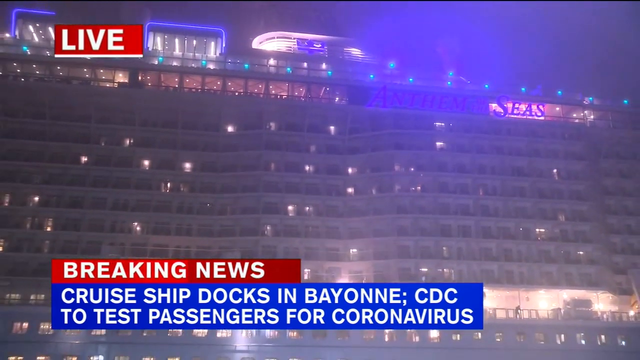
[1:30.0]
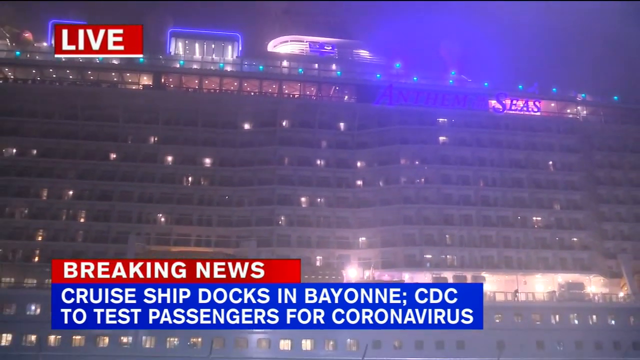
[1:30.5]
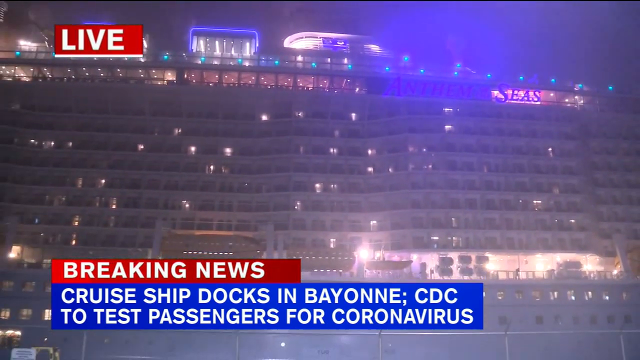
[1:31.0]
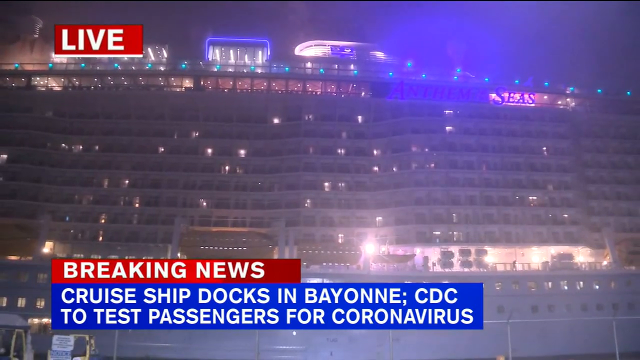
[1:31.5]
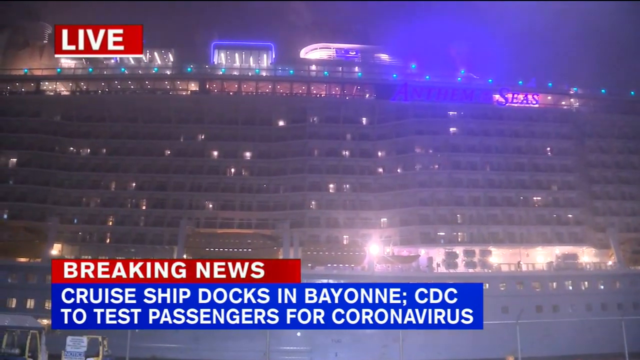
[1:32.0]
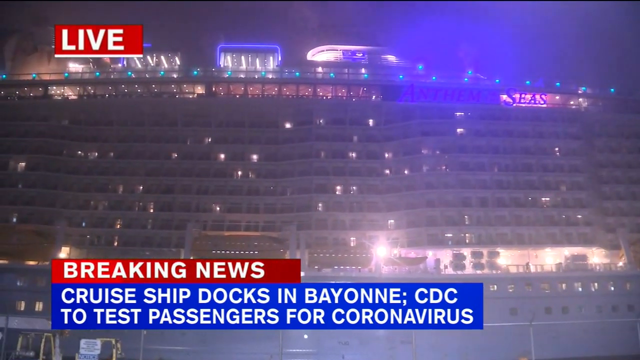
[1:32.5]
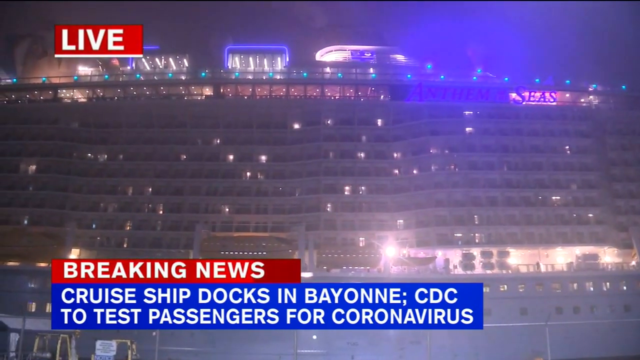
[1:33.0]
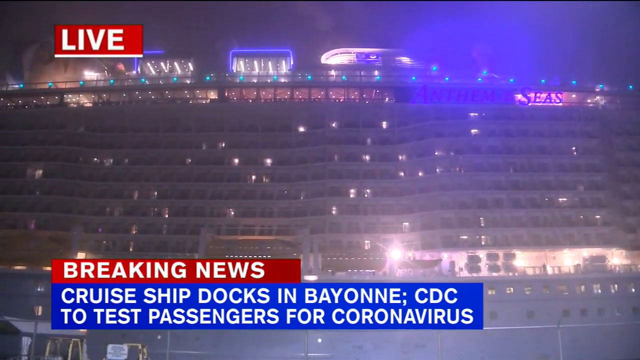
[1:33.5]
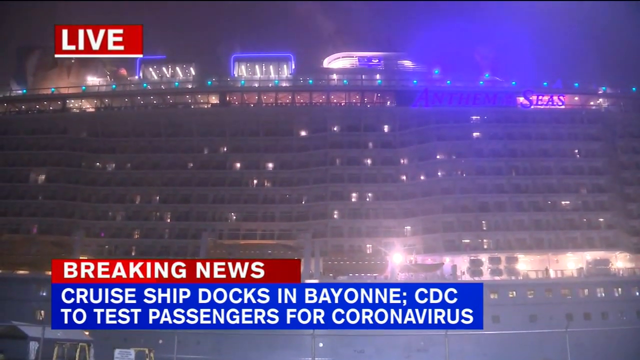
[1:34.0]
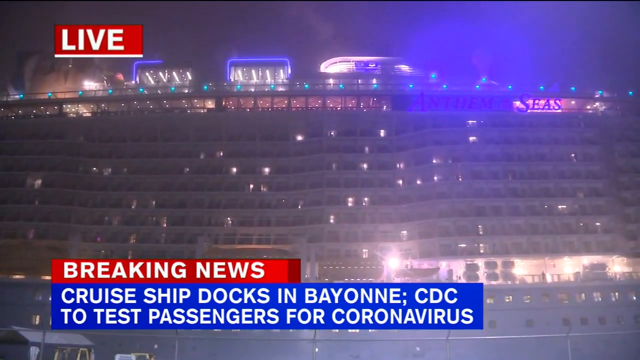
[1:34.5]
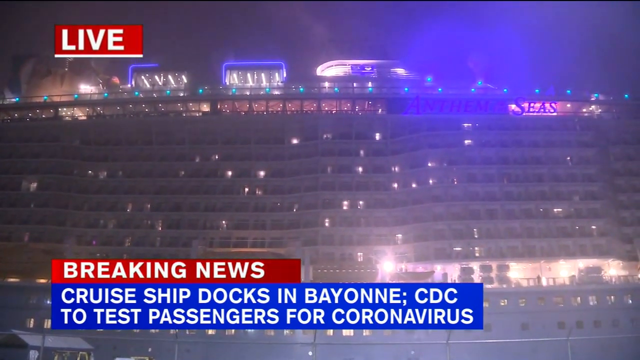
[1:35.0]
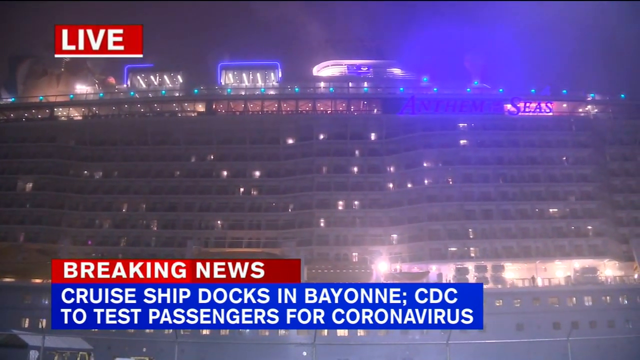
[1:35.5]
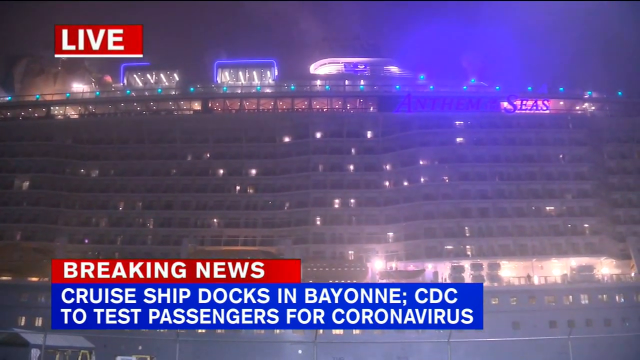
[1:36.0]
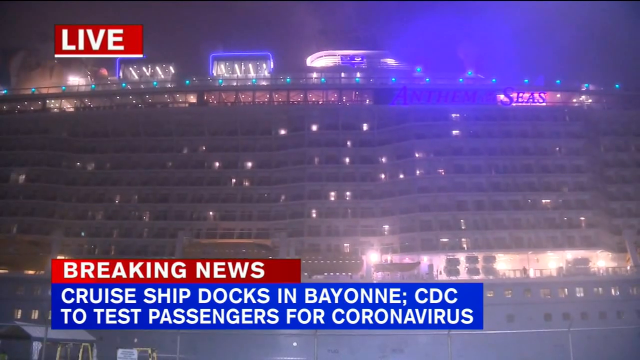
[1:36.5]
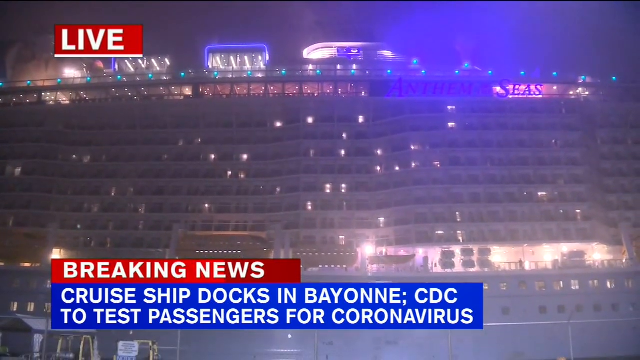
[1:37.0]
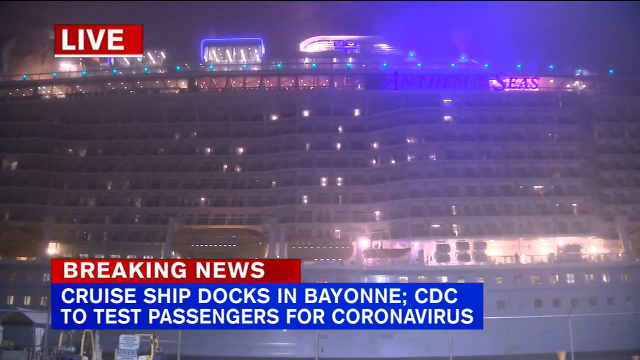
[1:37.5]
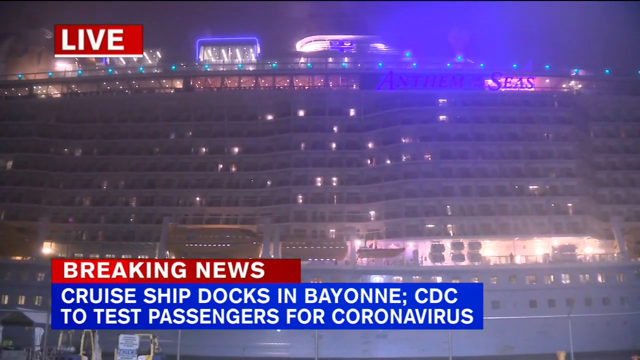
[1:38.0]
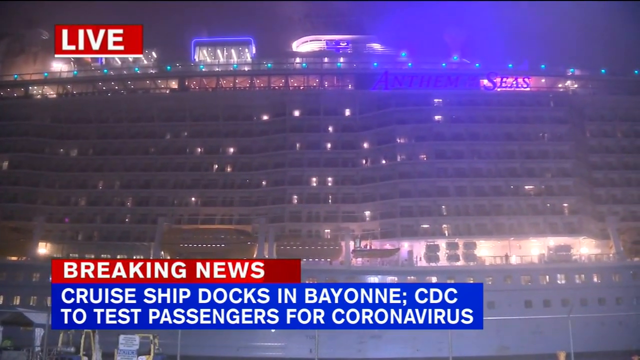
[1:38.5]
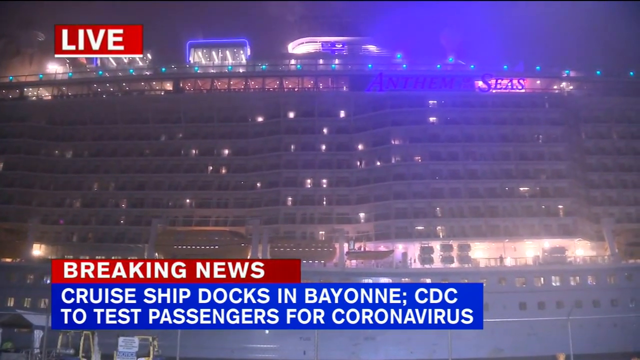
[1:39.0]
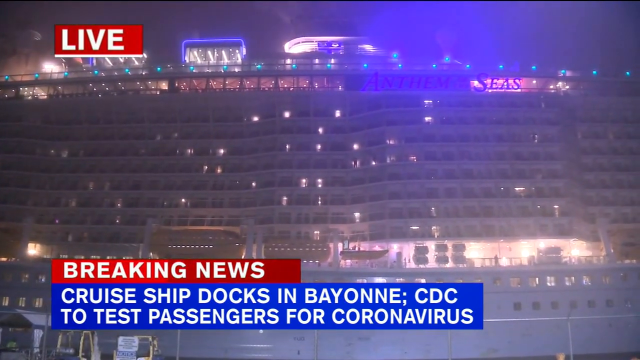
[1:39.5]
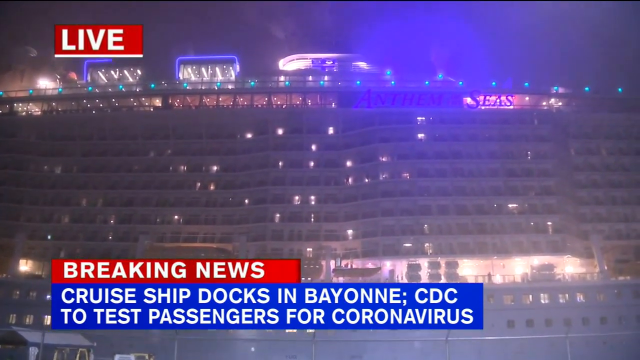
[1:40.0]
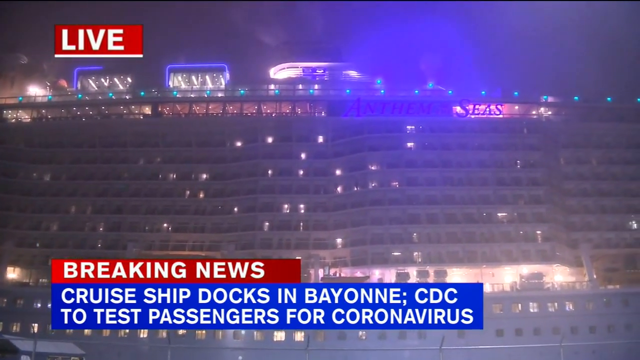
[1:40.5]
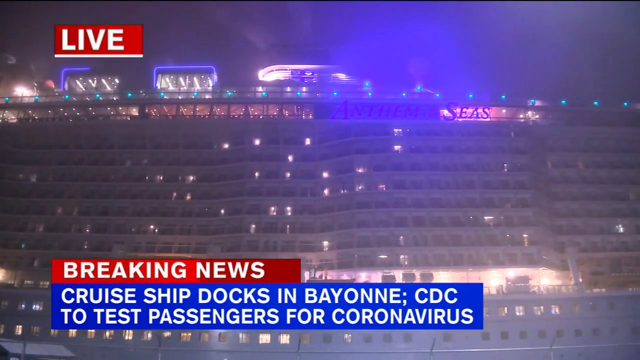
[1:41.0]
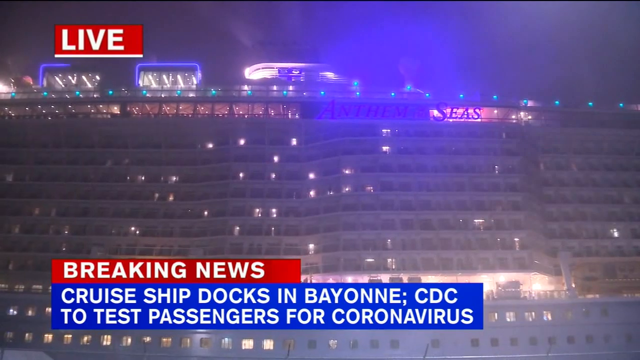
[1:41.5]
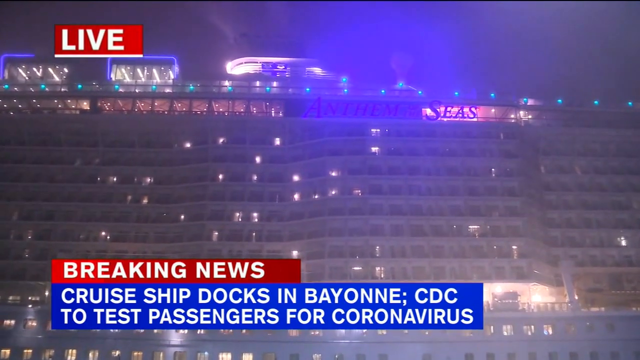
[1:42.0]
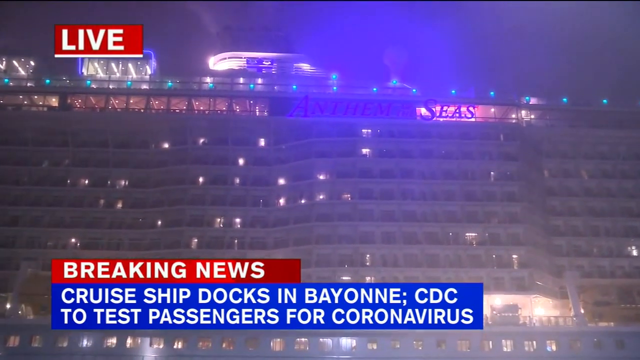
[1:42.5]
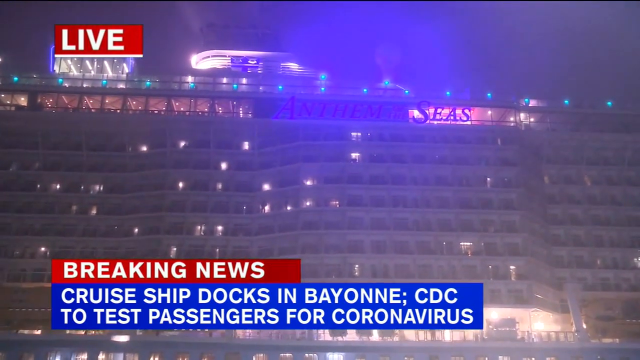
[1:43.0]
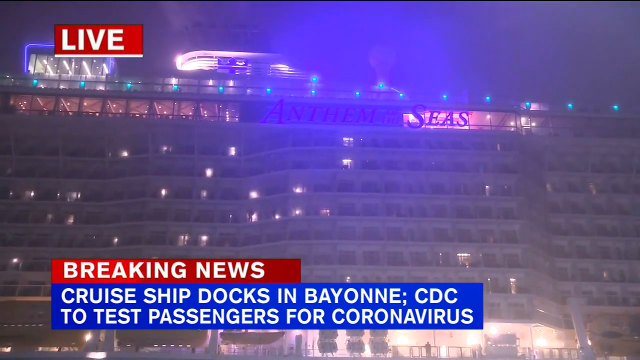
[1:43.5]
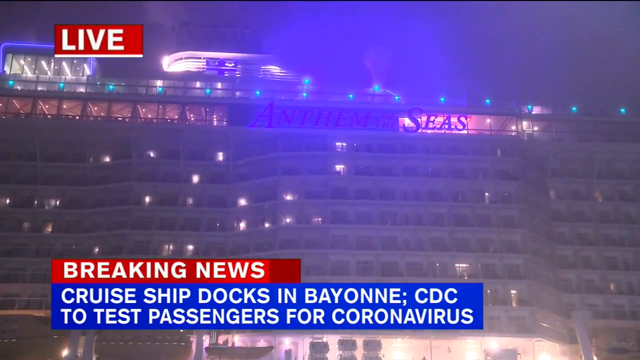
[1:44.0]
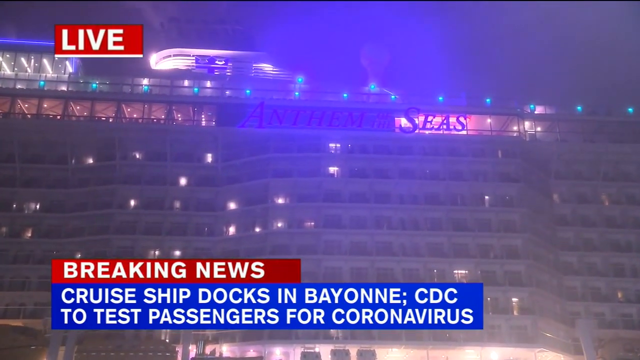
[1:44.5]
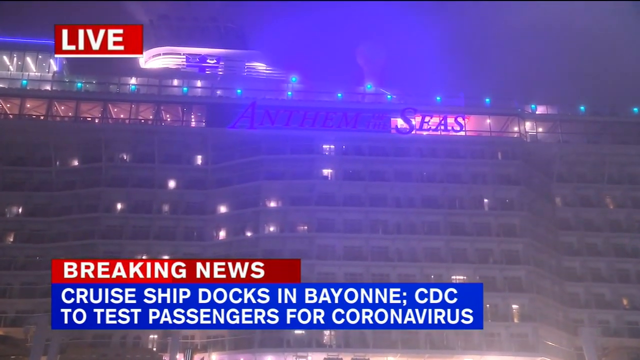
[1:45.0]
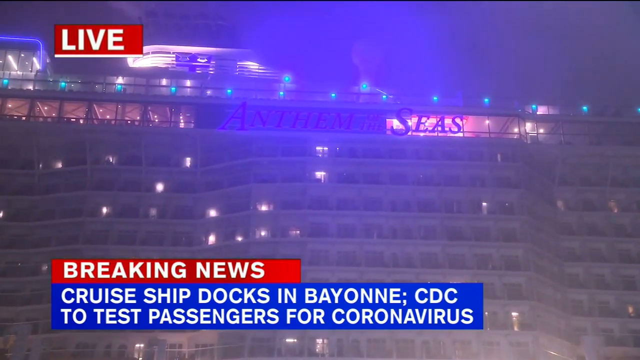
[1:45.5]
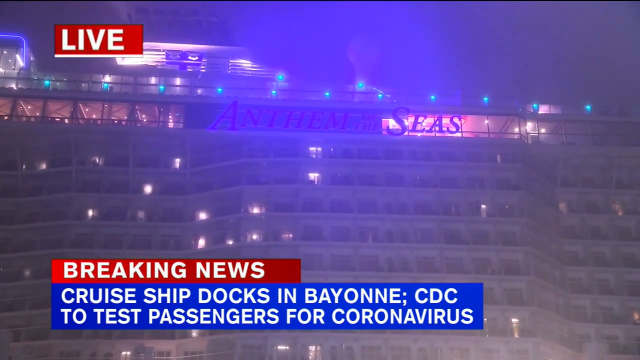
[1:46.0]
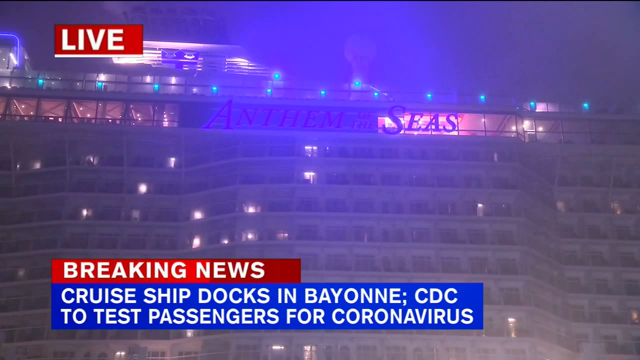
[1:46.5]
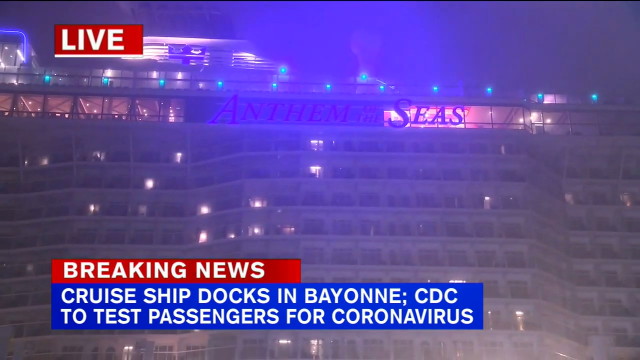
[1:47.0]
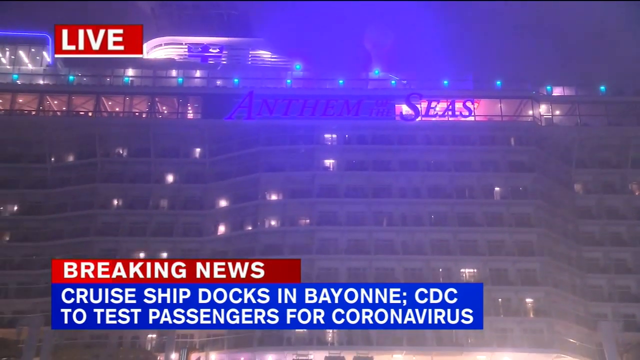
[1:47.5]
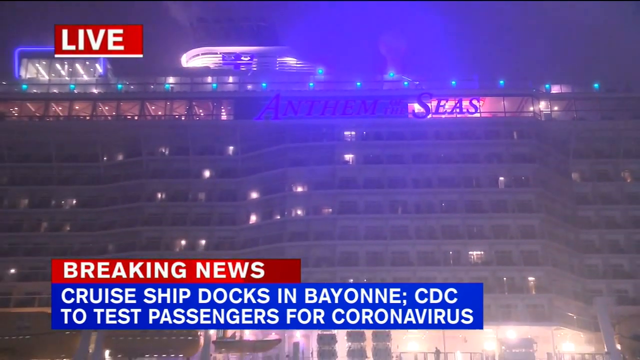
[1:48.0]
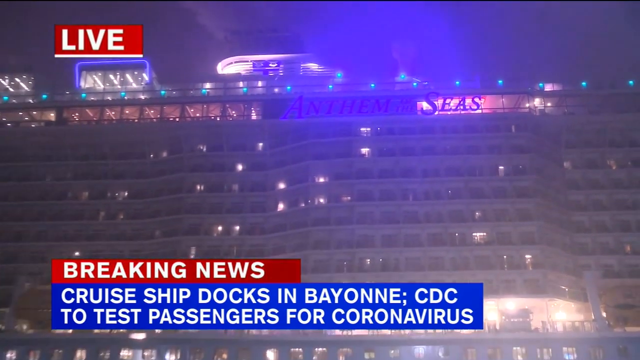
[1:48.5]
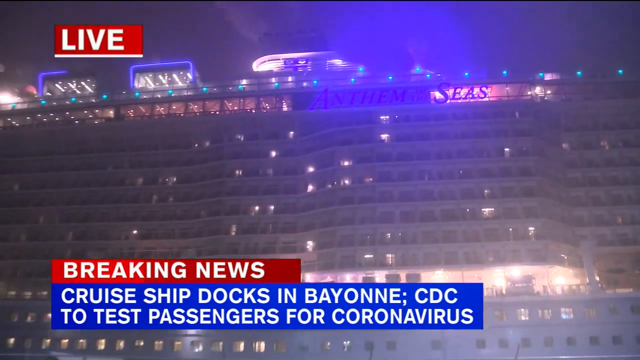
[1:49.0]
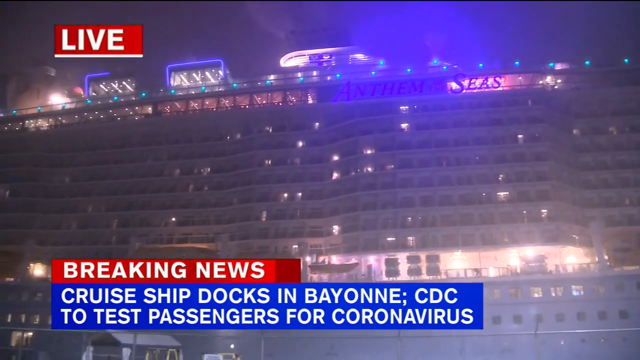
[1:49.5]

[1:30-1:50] A big white cruise ship has "Diamond Princess" written on it, with an ambulance next to it. Two men are outside the ambulance as it moves, giving it direction; one man seems to wear protective clothing and the other wears a blue suit. A message on screen says "breaking news, eight Americans on Japanese cruise ship test positive for coronavirus." The shot shifts to another cruise ship with its name written on the side, a Royal Caribbean cruise ship, at a port in Bayonne, New Jersey. The ship is moving; it is massive, white, with countless lighted windows and multiple decks, and the name "Anthem of the Sea" is brightly lit in blue on each side. There are static views of the ship at the dock. A message on screen says "cruise ship docks in Bayonne, CDC to test passengers for" coronavirus, and there is a line at the top of the screen. The atmosphere is hazy or foggy.